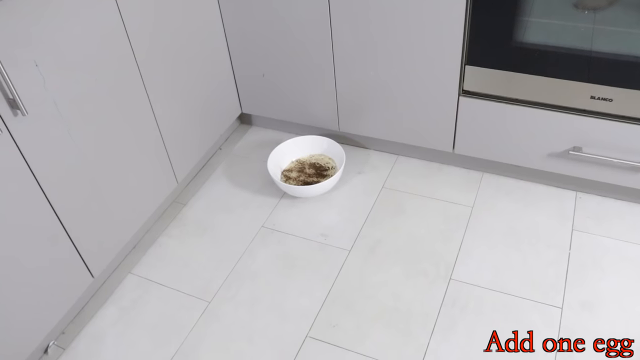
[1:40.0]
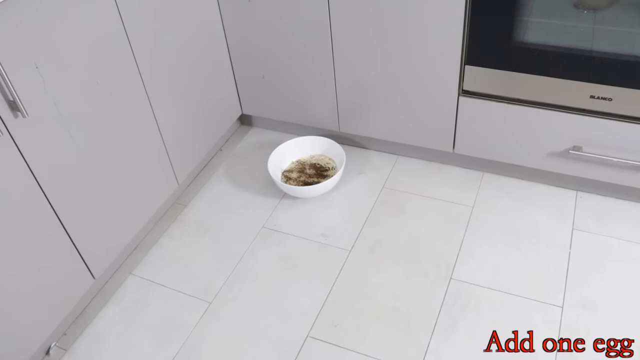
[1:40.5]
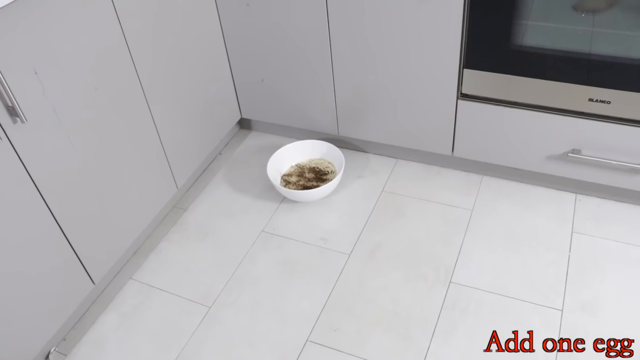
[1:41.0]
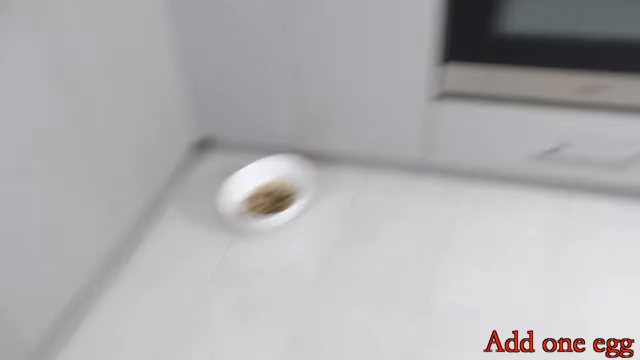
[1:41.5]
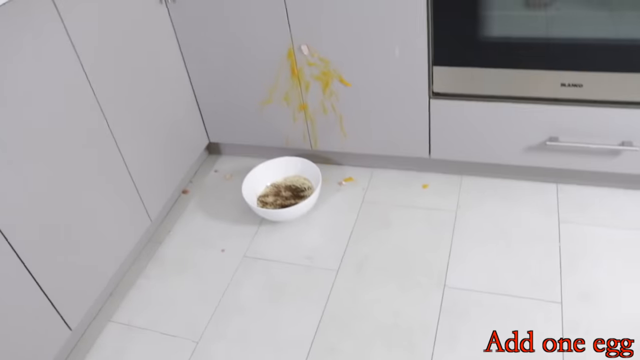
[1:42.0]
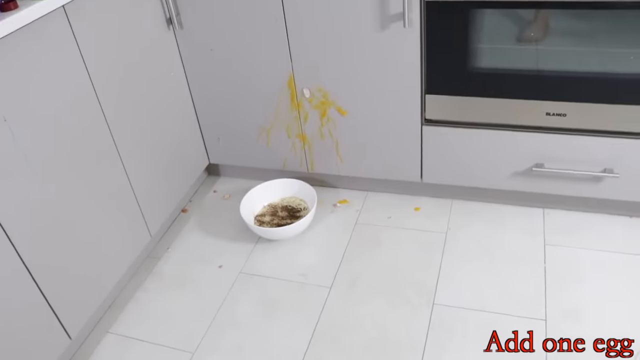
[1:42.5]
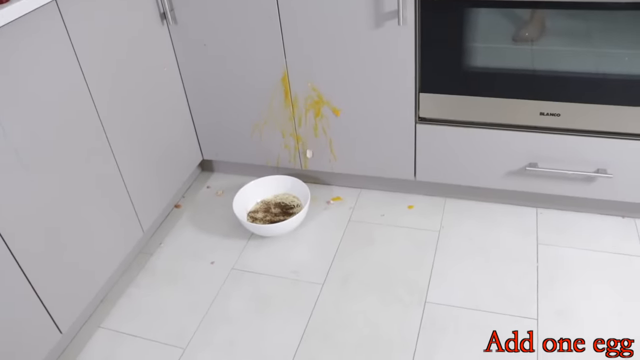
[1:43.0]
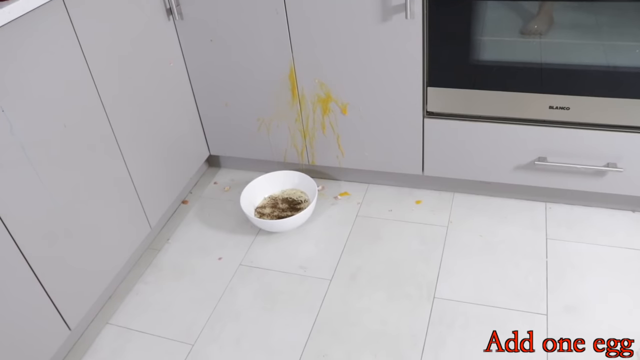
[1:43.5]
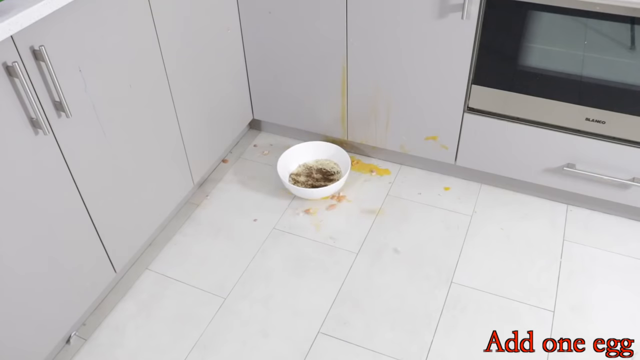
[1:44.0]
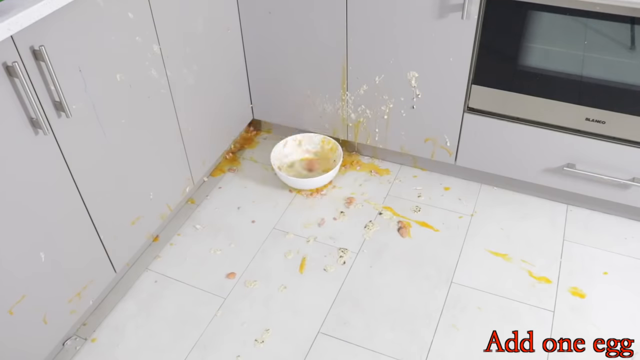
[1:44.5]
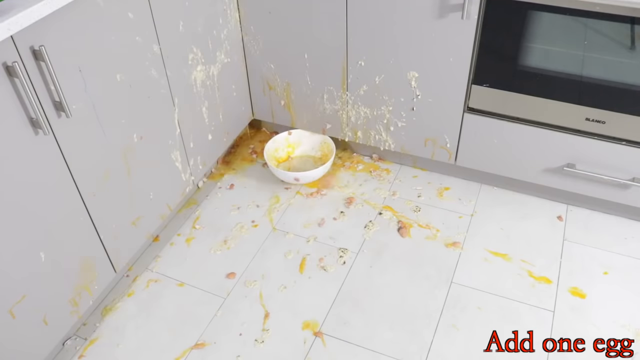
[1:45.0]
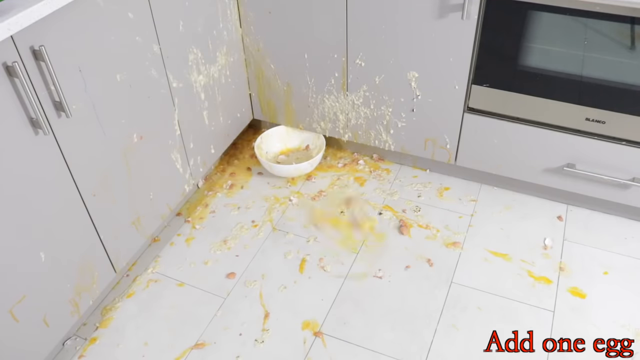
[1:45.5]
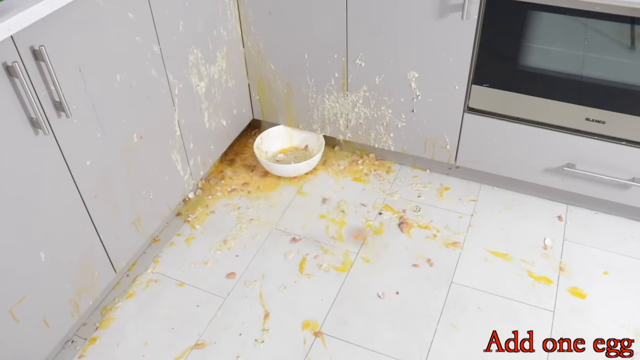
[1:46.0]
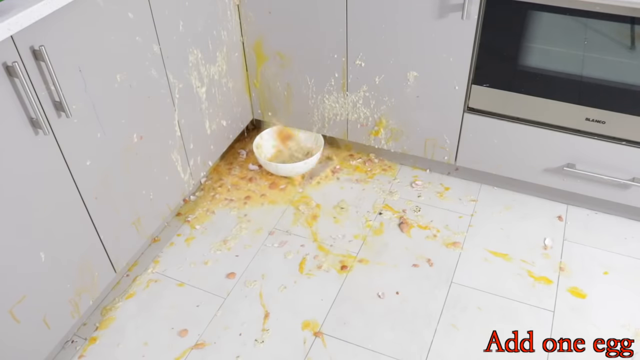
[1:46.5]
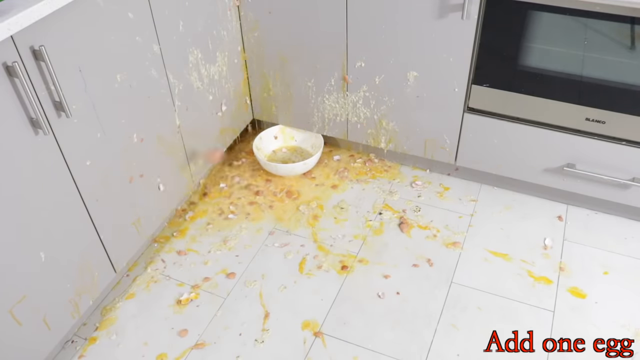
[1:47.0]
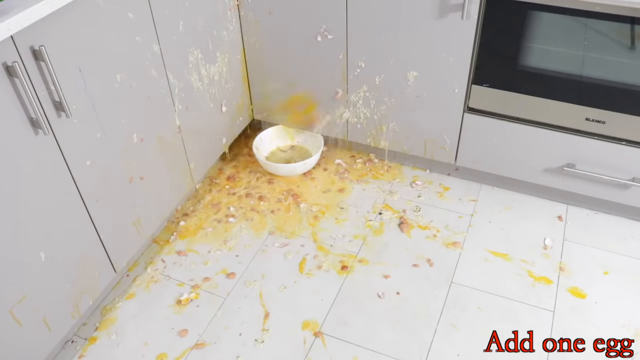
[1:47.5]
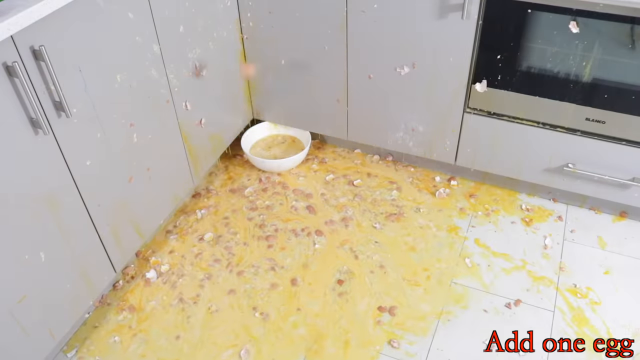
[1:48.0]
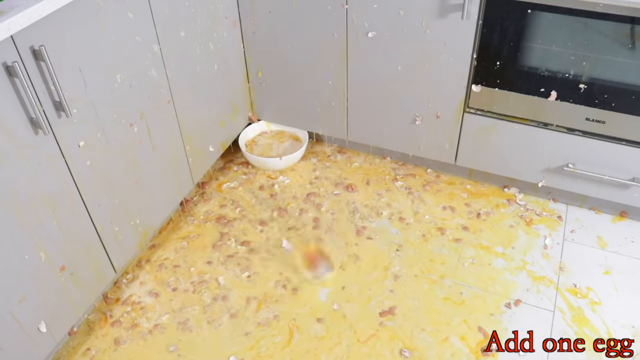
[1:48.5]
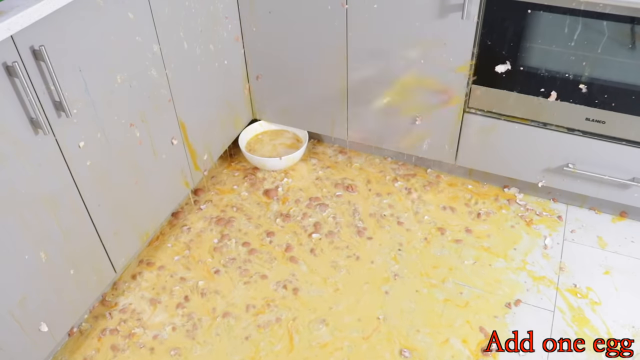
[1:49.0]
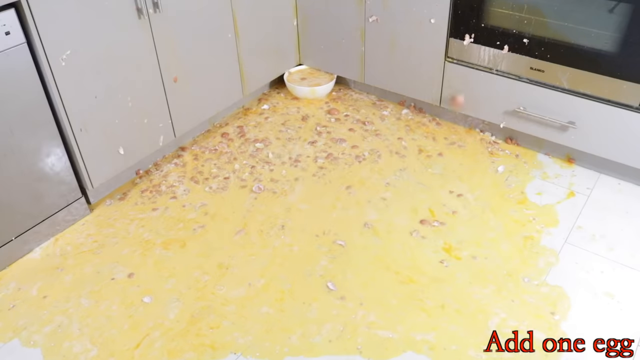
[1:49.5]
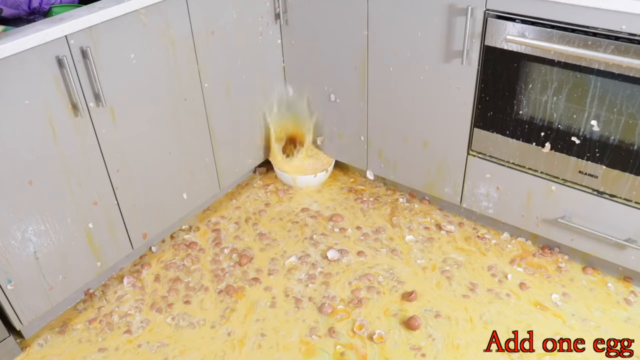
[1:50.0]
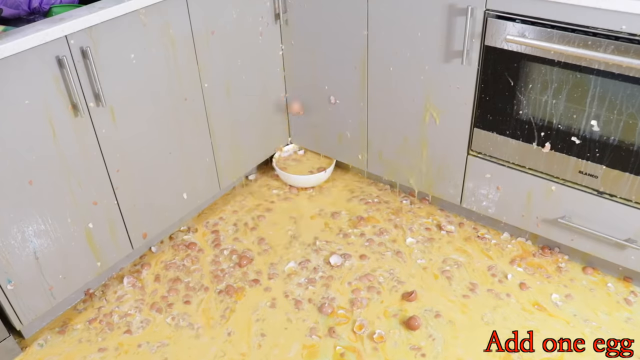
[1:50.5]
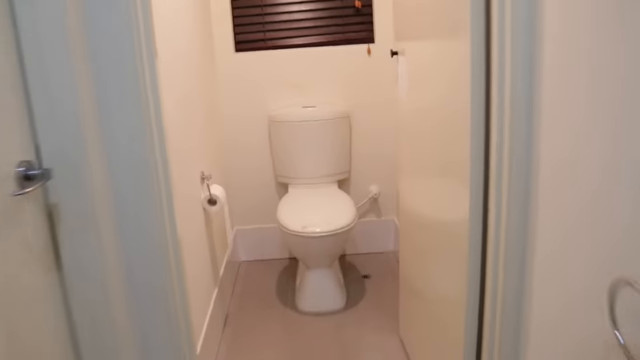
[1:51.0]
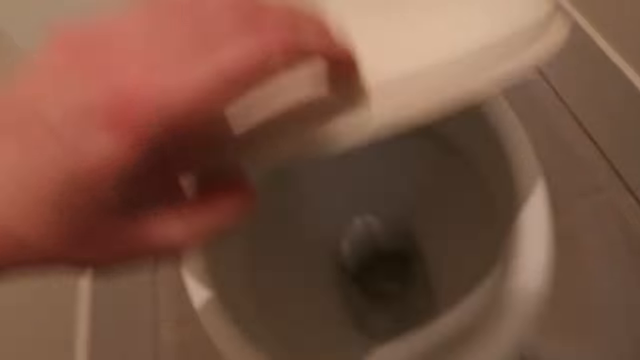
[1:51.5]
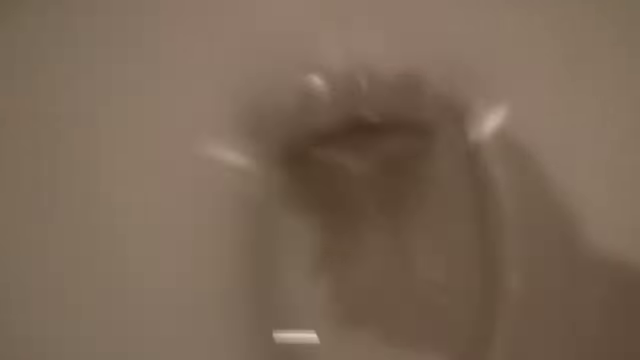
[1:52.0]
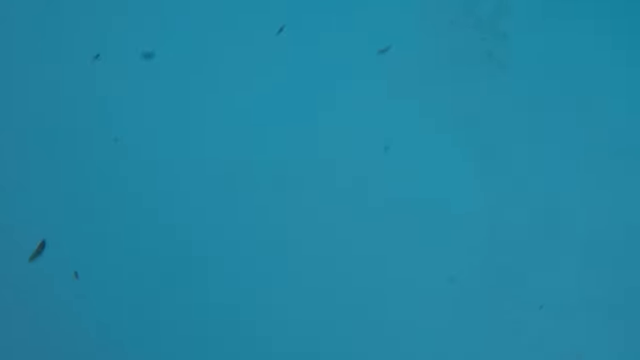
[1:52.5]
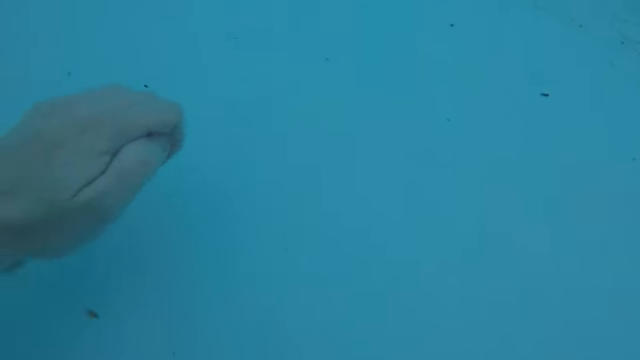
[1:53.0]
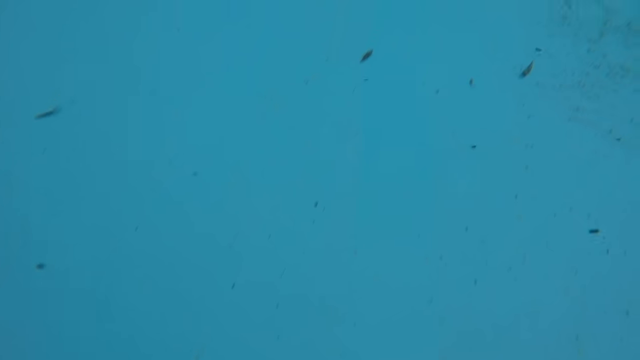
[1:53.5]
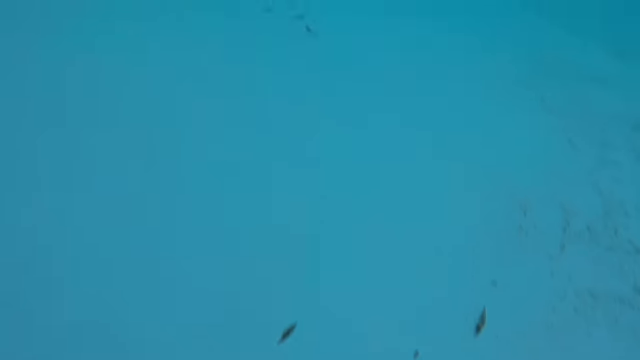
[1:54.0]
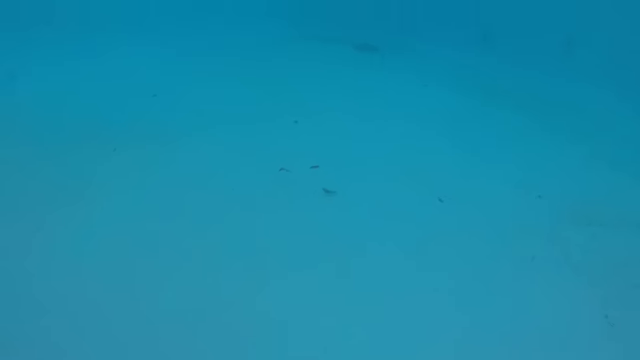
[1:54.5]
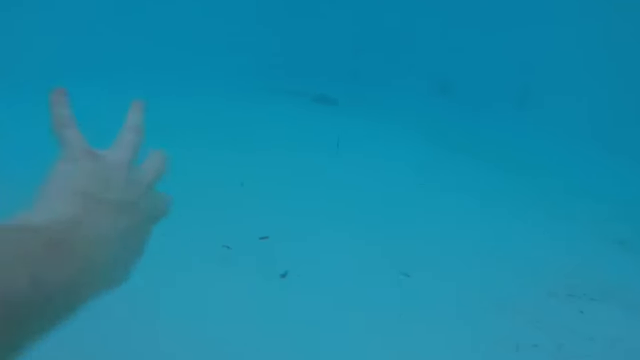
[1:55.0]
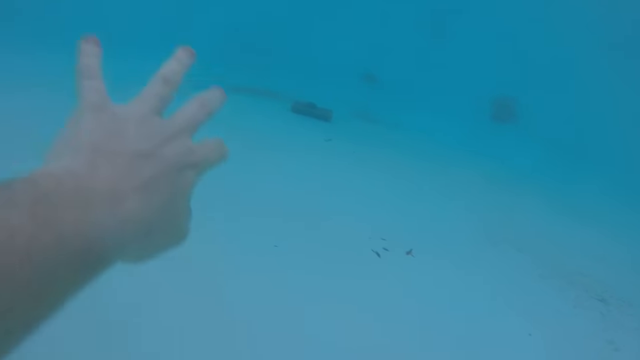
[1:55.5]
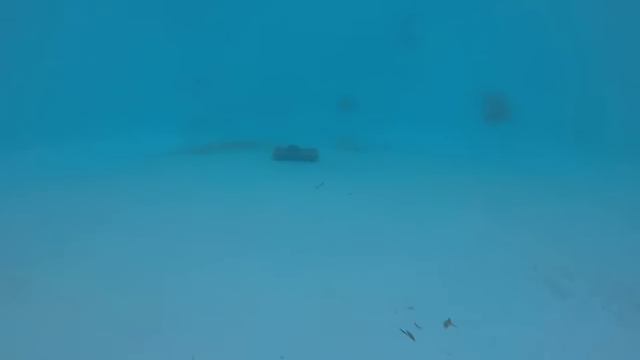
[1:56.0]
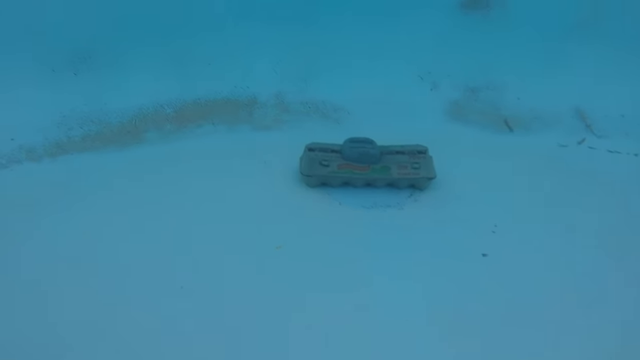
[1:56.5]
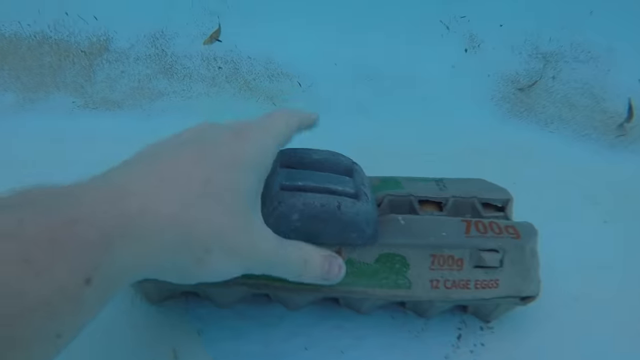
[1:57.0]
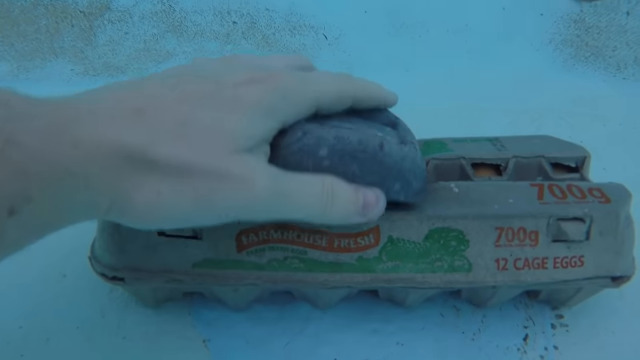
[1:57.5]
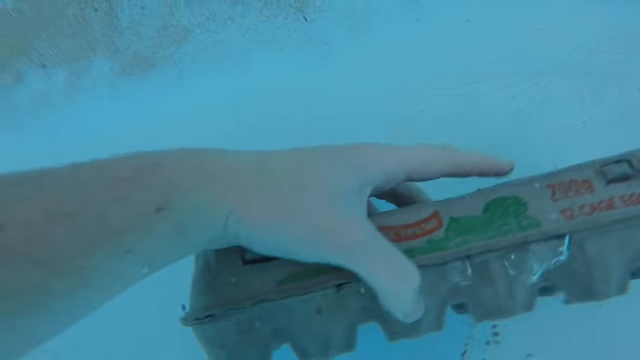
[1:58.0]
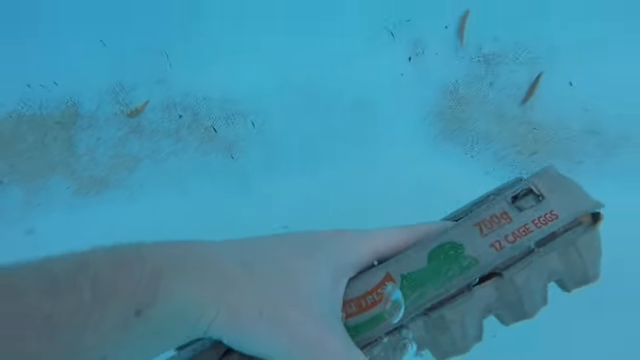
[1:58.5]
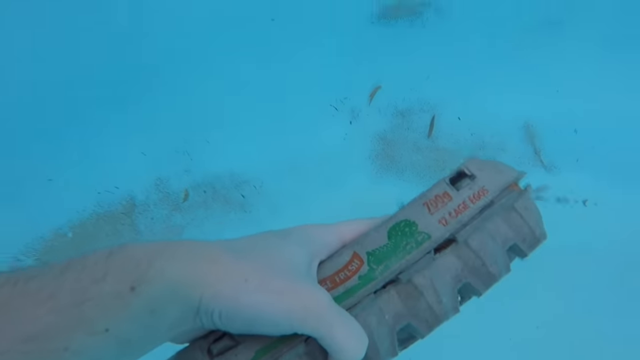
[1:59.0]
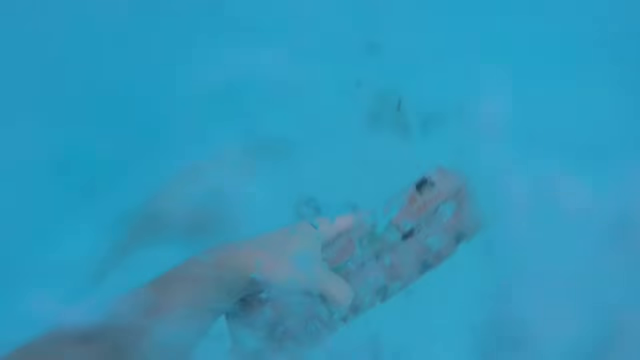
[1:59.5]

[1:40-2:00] The bowl is on the floor in the corner of the kitchen, which has white tile flooring and white or light gray cabinets, with a stove on the right side. The camera shakes, and yellow liquid suddenly appears splattered on the cabinets behind the bowl. A white fragment slides down from the yellow liquid onto the floor, and after a cut the yellow liquid has slid off the cabinets onto the floor right next to the bowl. The bowl appears to be pelted by eggs that splatter on the floor around it and into it, and the text "Add 1 Egg" appears at the bottom right. A significant amount of yellow liquid and fragments showers around the bowl, covering the floor, and the camera begins zooming out slightly as the floor is covered with more and more egg yolk and liquid; many fragments build up, and the cabinets continue to be stained by eggs. The camera suddenly cuts to a hallway with white walls and doors on the left and right, with what appears to be a white toilet ahead in a small room, with what appears to be a toilet brush behind it and a roll of toilet paper hanging on the wall on the left side. The camera walks into the toilet room, and the person opens the toilet and appears to stick the camera into the water. The view cuts to what appears to be underwater, with the hand reaching forward and appearing to swim forward through an indistinct location, until what appears to be an egg carton gradually comes into view. Something is on top of the egg carton; the hand picks this object up and places it to the side, then grasps the egg carton from above, fidgets with it, and pulls it toward the camera.